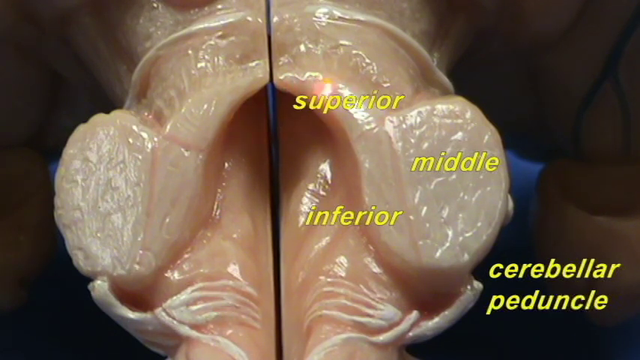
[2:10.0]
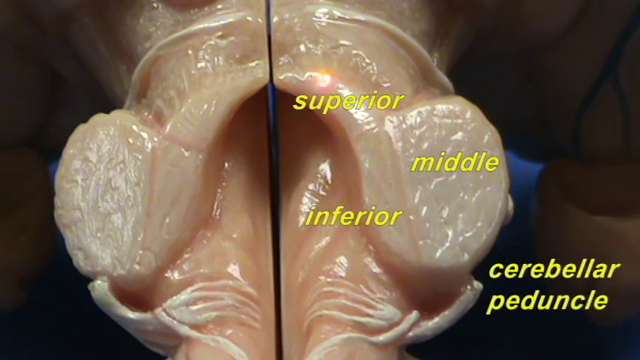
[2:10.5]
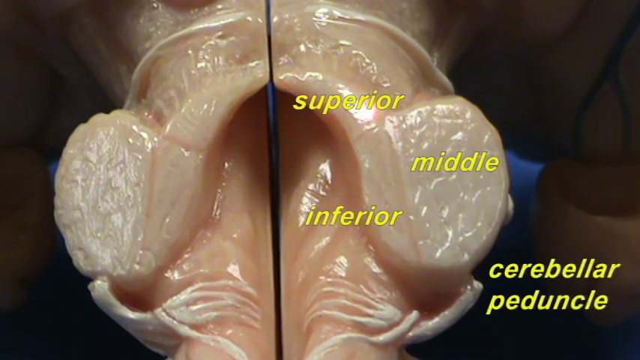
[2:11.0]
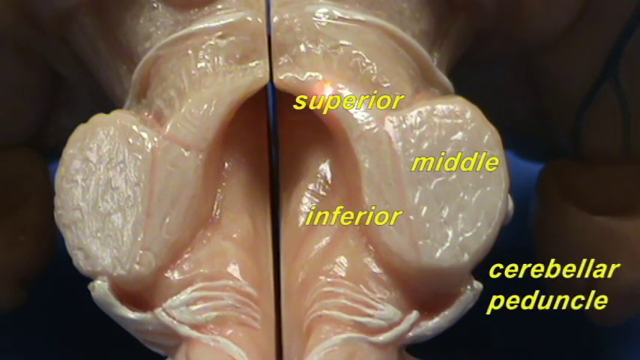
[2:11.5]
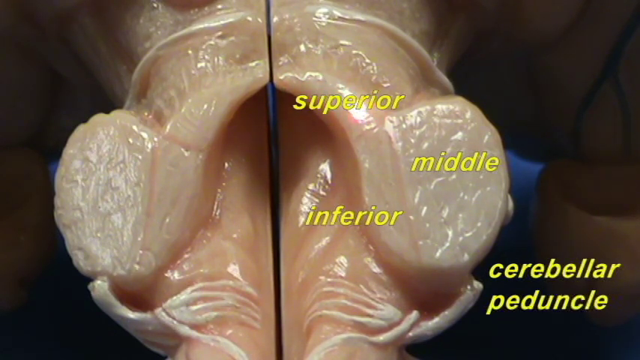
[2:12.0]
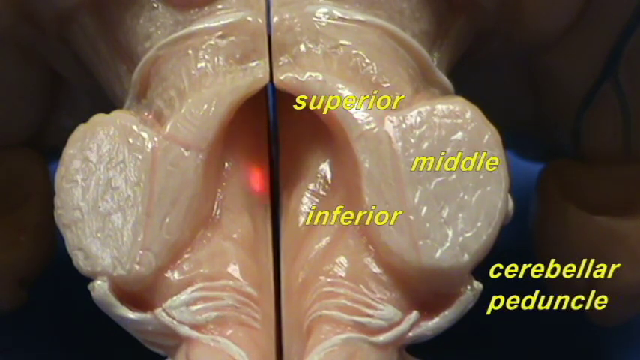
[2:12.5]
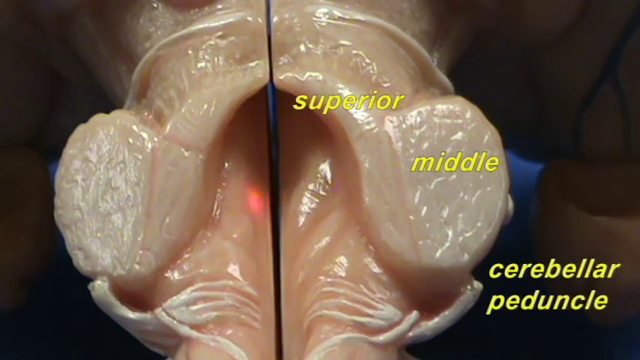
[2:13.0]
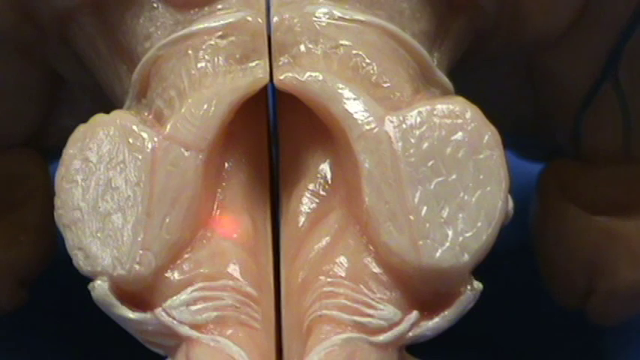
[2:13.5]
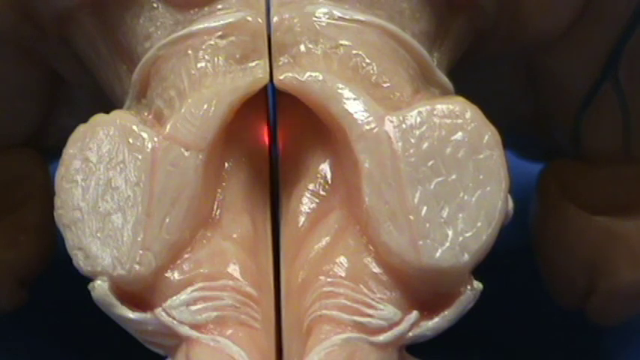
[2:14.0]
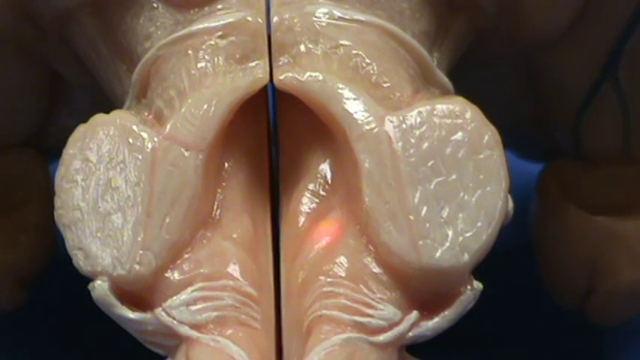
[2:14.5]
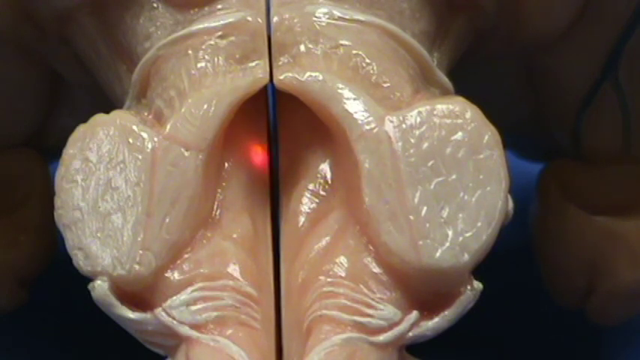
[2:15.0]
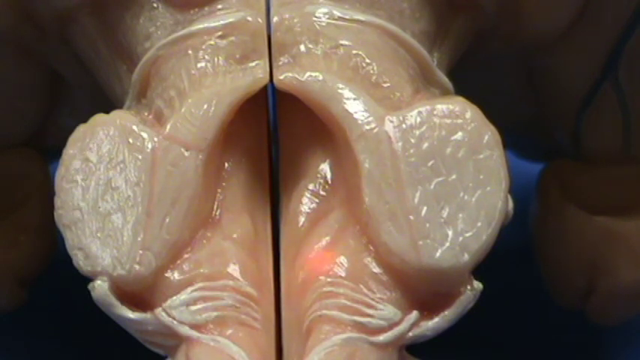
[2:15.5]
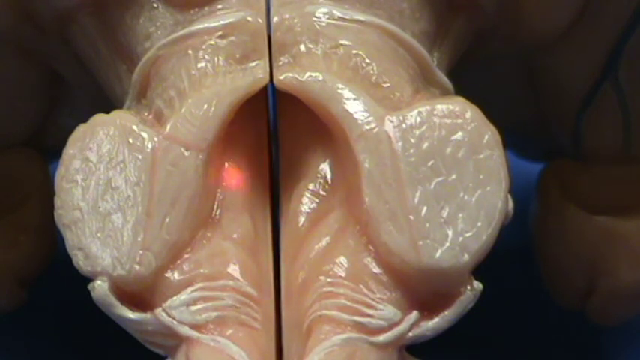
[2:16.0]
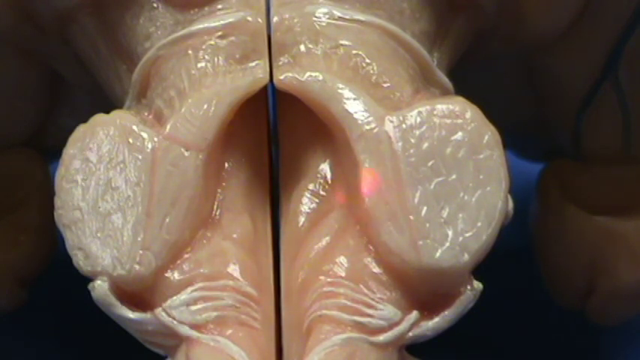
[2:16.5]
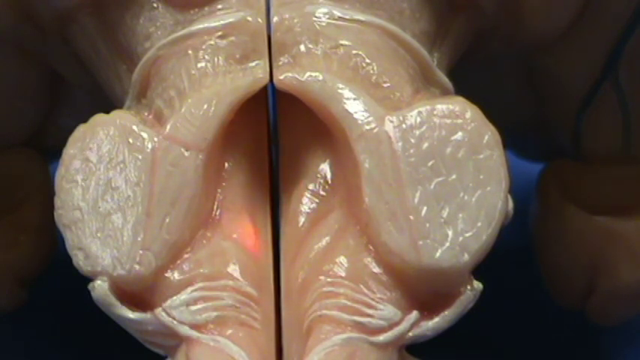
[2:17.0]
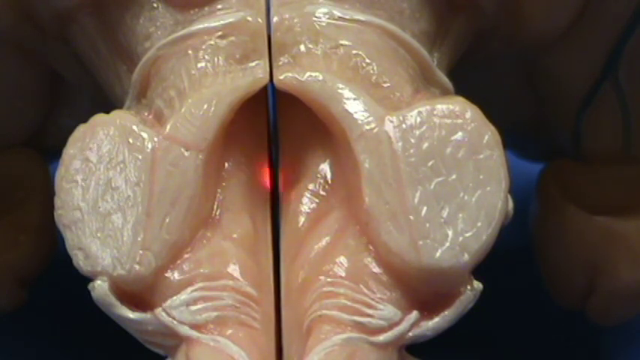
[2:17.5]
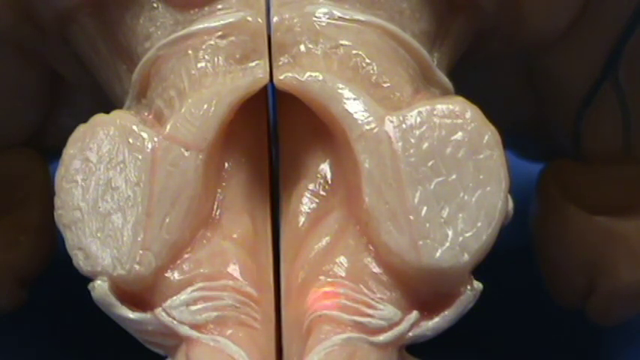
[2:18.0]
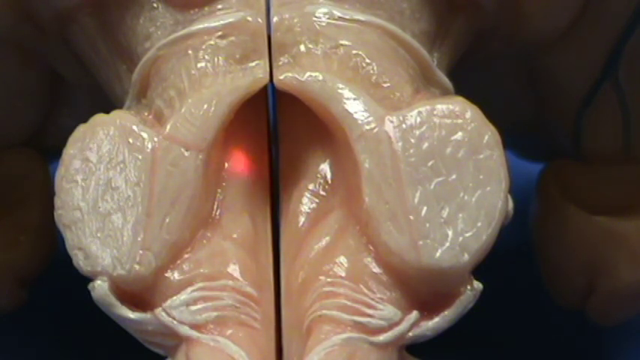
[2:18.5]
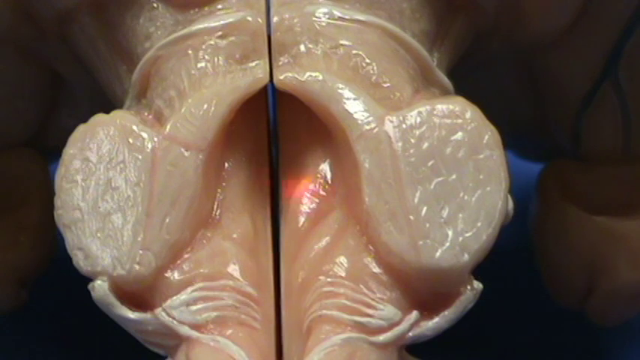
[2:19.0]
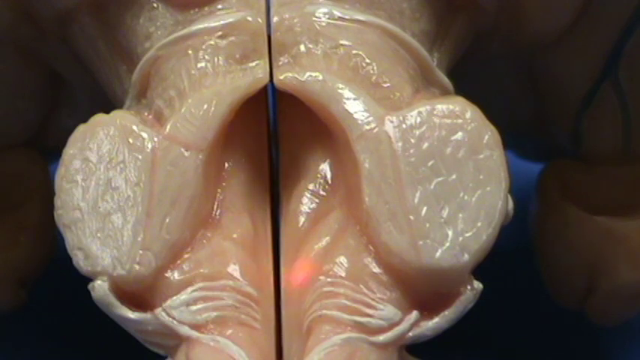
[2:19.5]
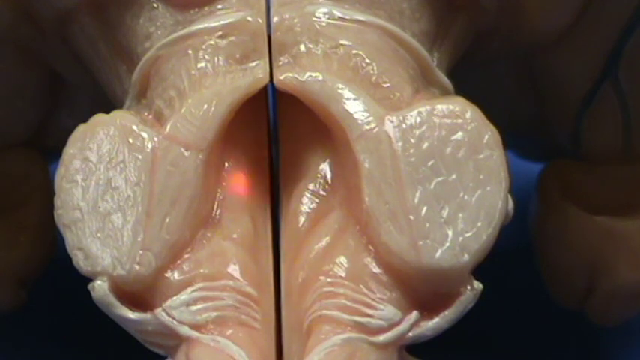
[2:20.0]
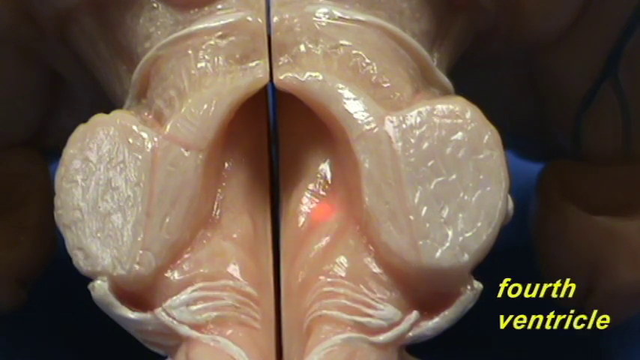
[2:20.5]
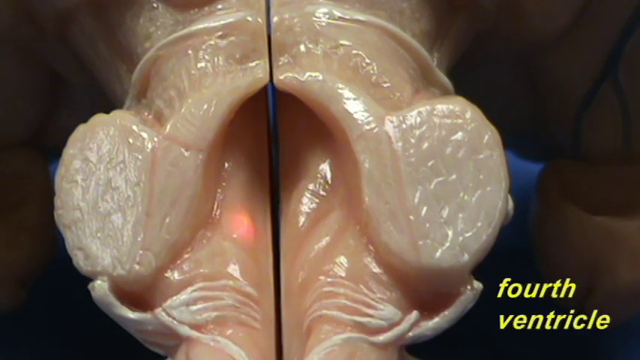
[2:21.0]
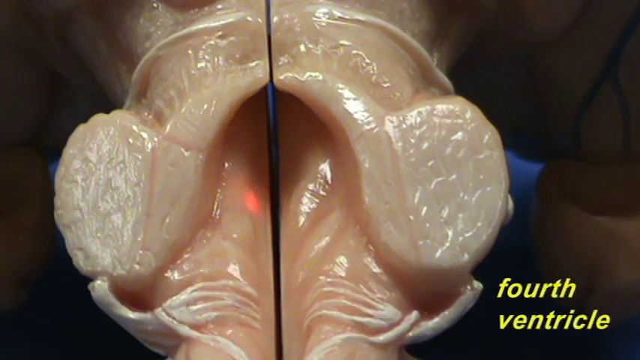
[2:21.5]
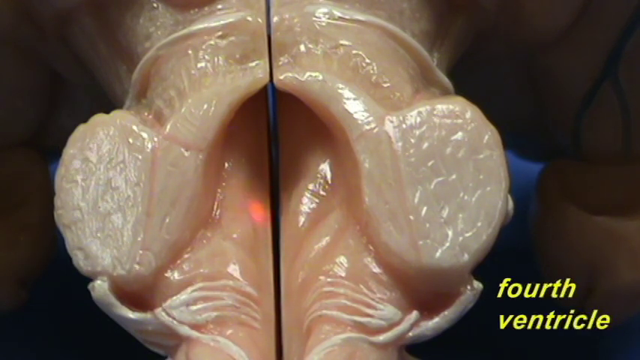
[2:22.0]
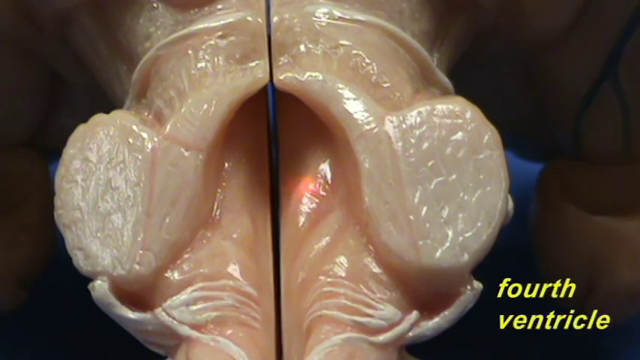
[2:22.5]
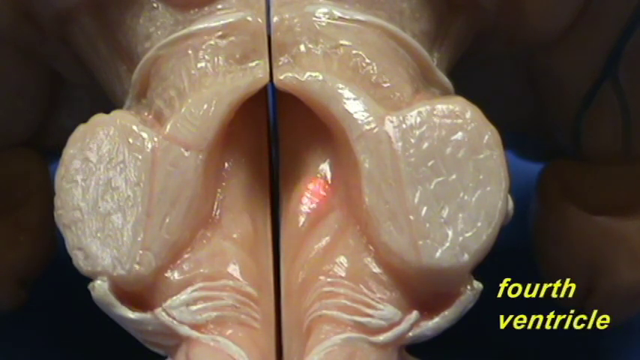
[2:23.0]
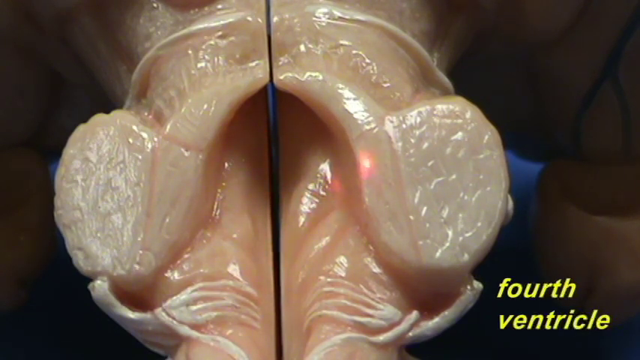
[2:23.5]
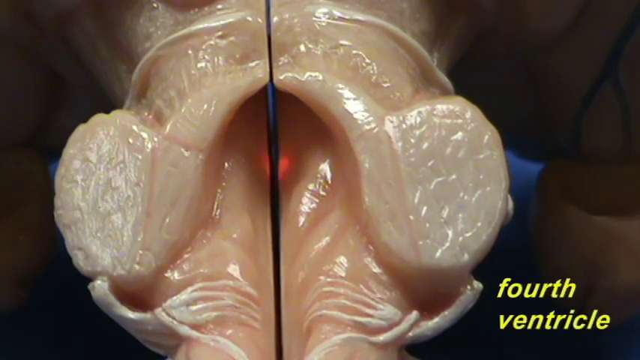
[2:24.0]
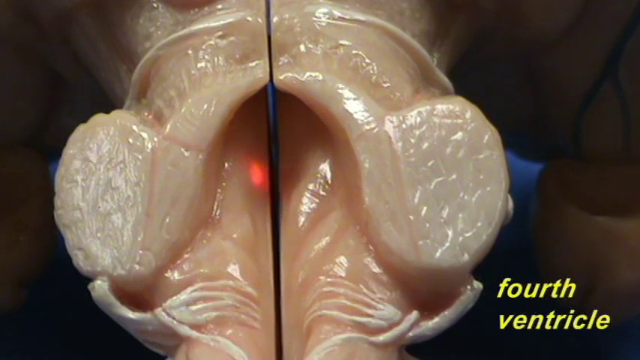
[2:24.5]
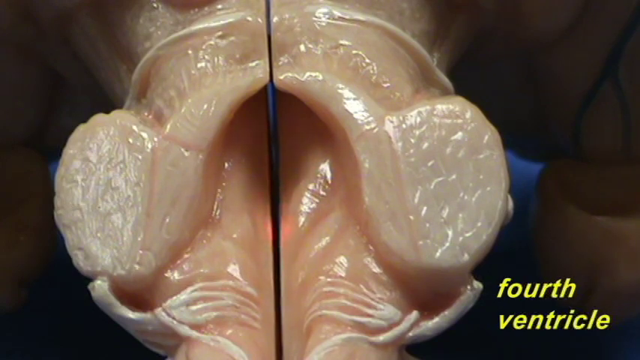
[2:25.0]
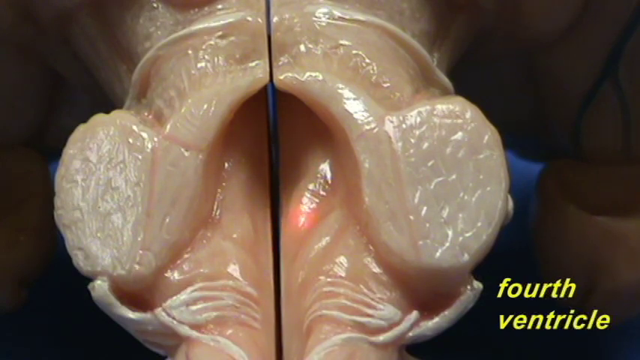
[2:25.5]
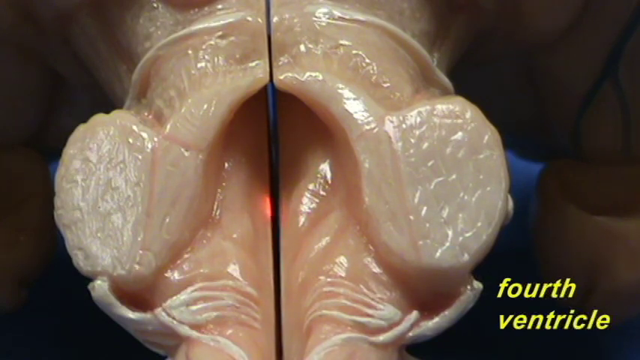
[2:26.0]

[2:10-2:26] The extreme close-up between the two discs continues. The laser goes to the center, to what appears to be the tunnel of the vagina-like opening, and circles repeatedly up inside it. The words "superior," "middle," "inferior" and "cerebellar peduncle" remain on the right side of the screen while the laser keeps circling inside the opening. The yellow words then all disappear, and the laser circles the V-shaped entrance to the opening at the bottom repeatedly. A new set of words appears at the bottom right of the screen reading "fourth ventricle." The laser continues to circle this interior portion of the brain stem. The fourth ventricle is all very smooth flesh, with what appear to be two or three ridges on either side where it comes out to the big ridge of flesh at the front that holds up the two little disks. The laser keeps circling both deep within the opening and out to the entrance at the bottom. Little white lines begin to appear over the very smooth flesh, following the ridge and the curve at the bottom of the entrance to the ventricle.